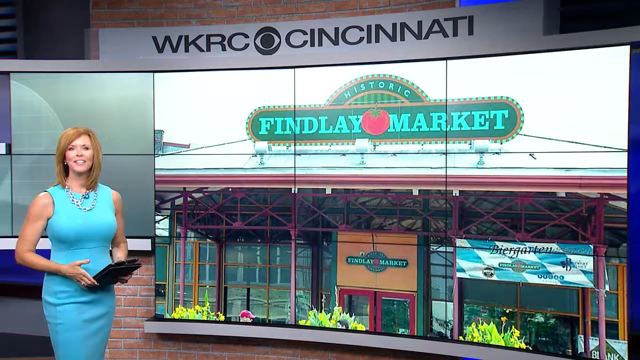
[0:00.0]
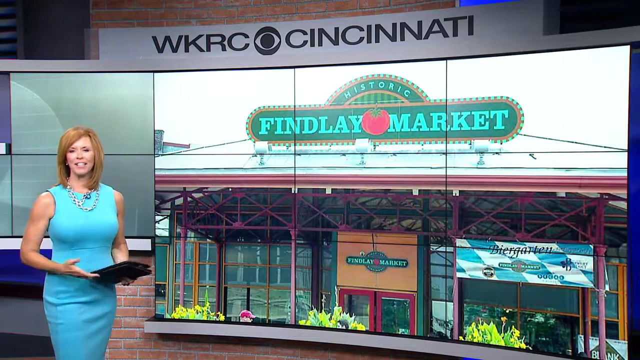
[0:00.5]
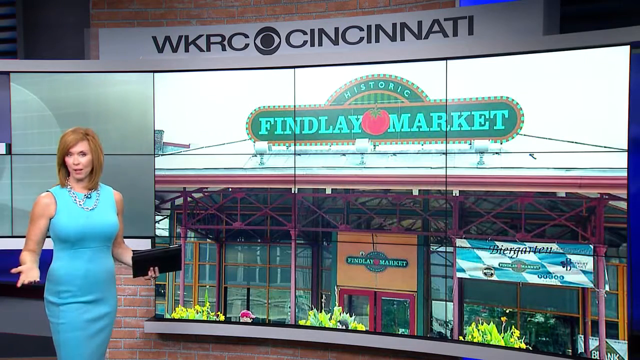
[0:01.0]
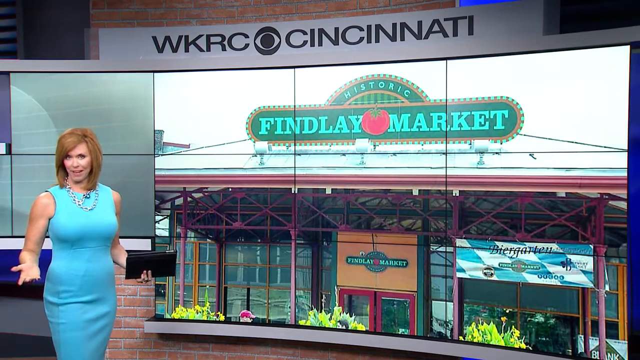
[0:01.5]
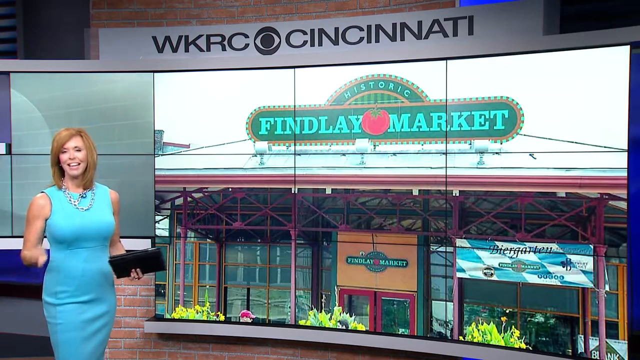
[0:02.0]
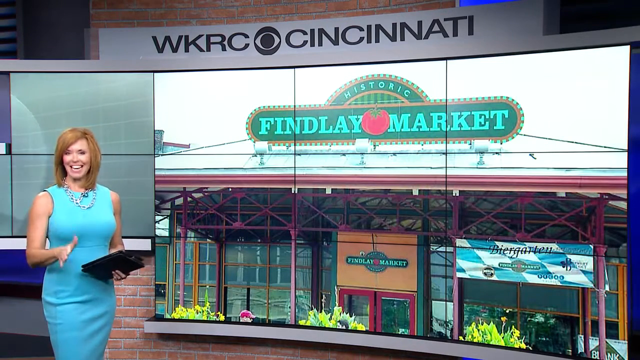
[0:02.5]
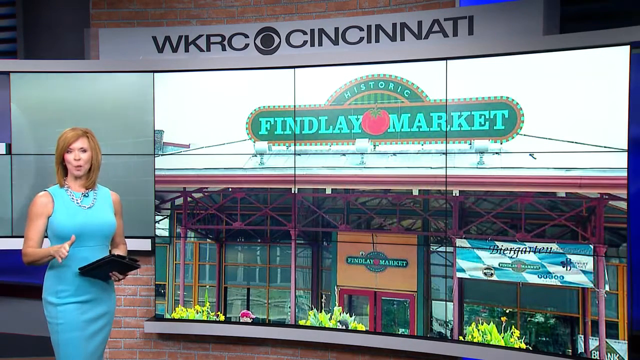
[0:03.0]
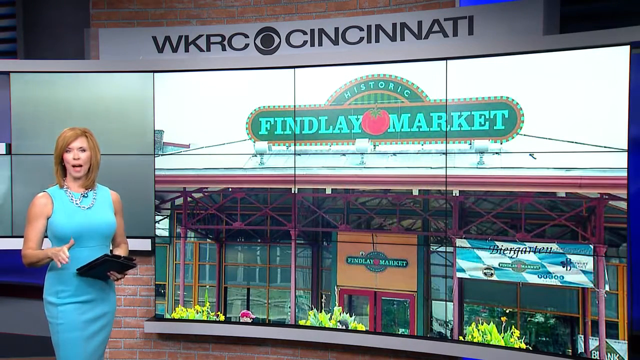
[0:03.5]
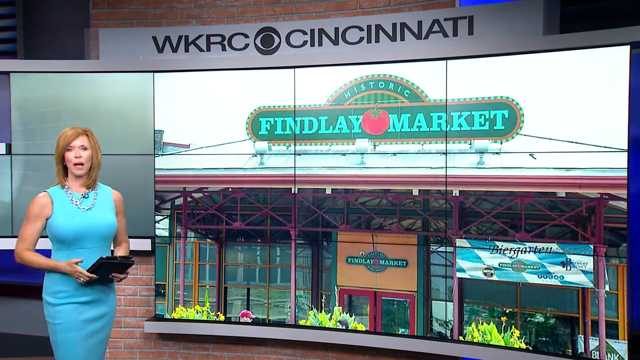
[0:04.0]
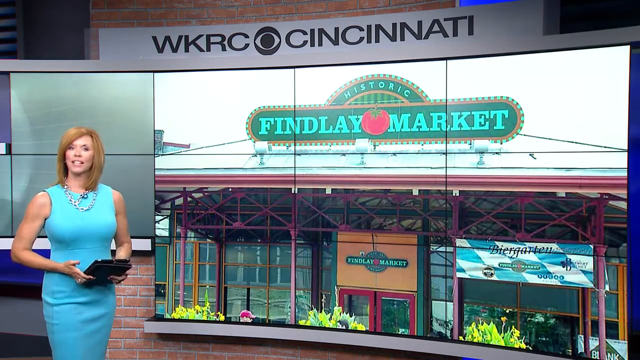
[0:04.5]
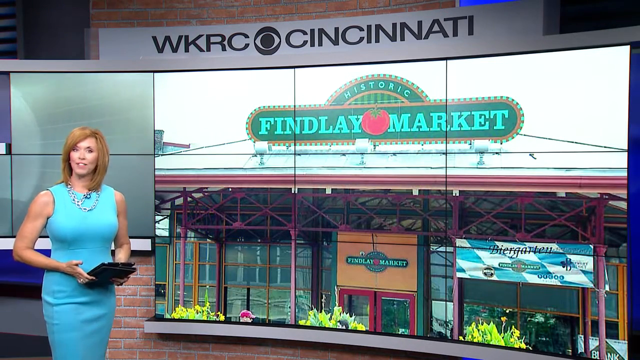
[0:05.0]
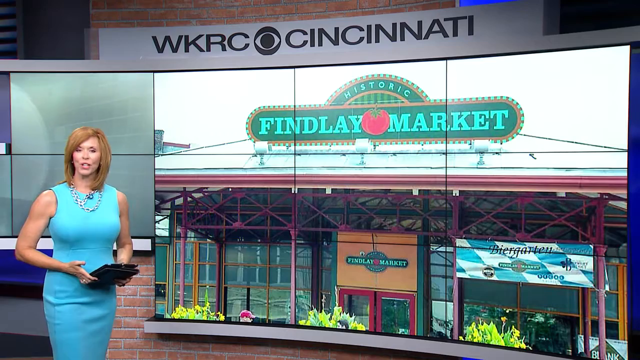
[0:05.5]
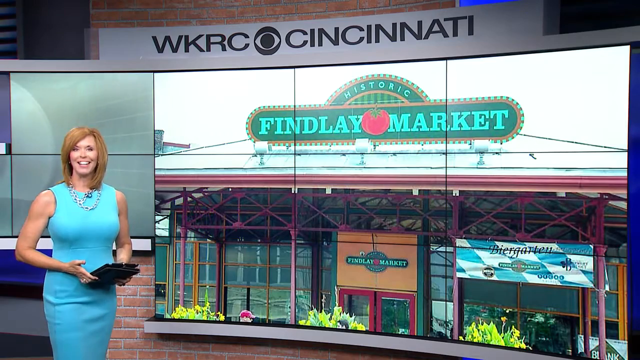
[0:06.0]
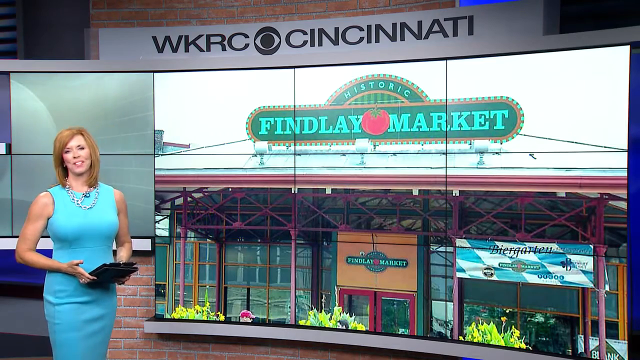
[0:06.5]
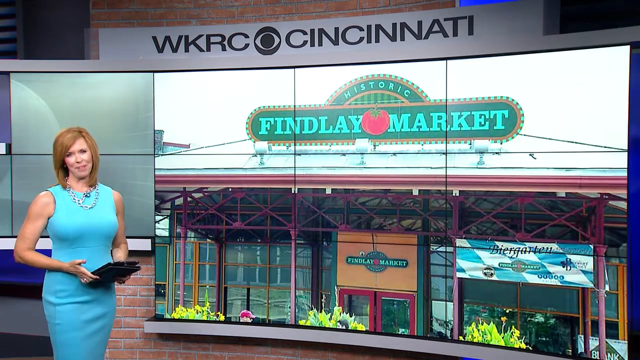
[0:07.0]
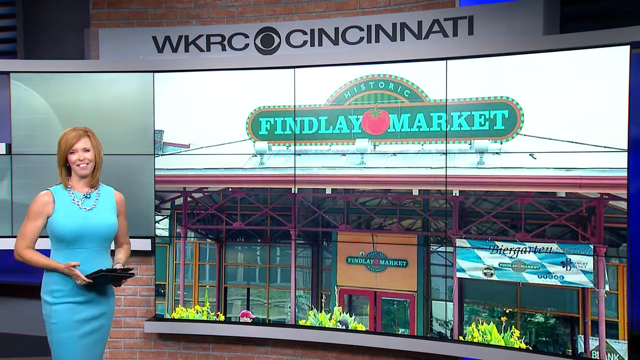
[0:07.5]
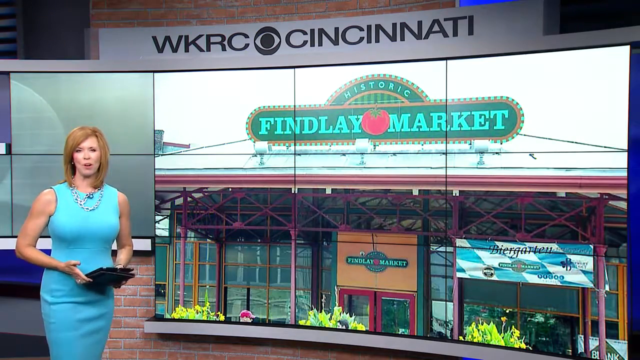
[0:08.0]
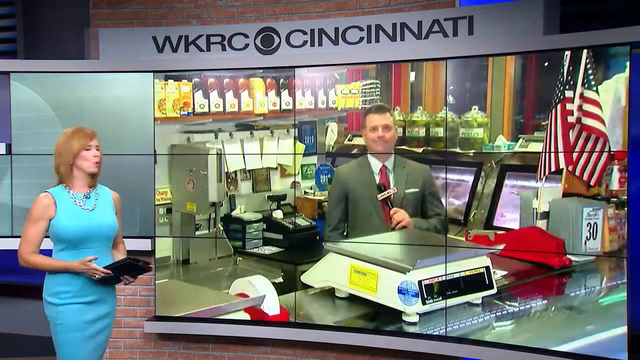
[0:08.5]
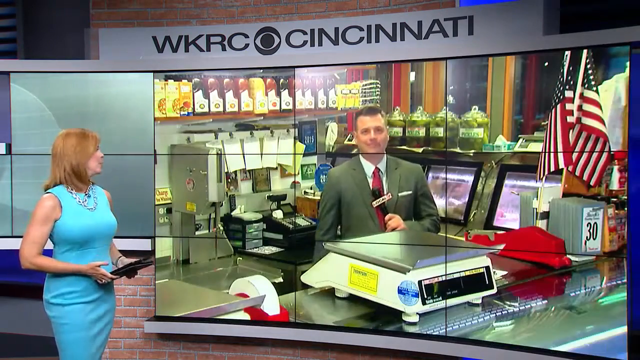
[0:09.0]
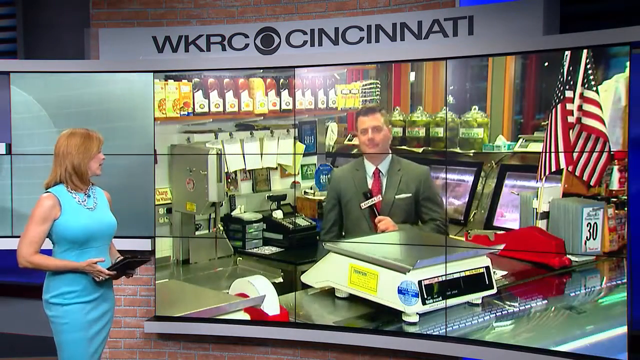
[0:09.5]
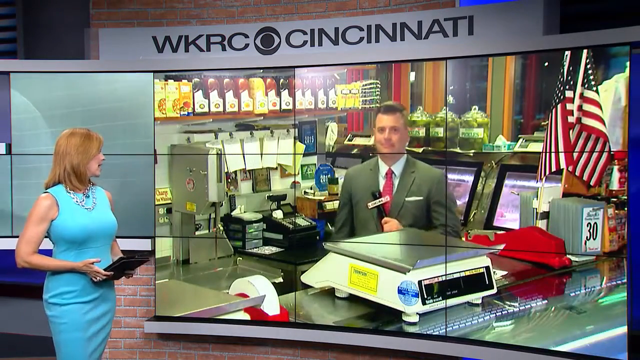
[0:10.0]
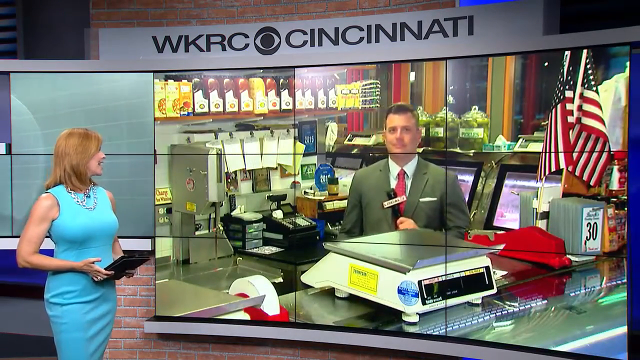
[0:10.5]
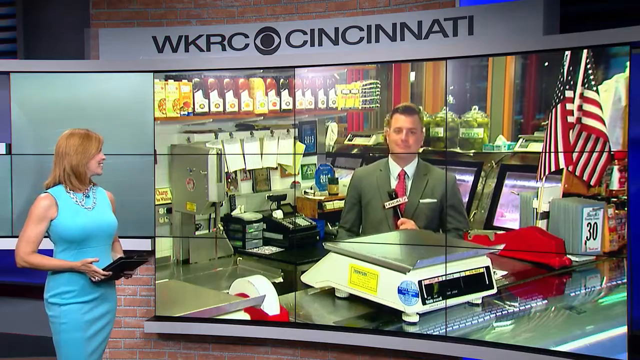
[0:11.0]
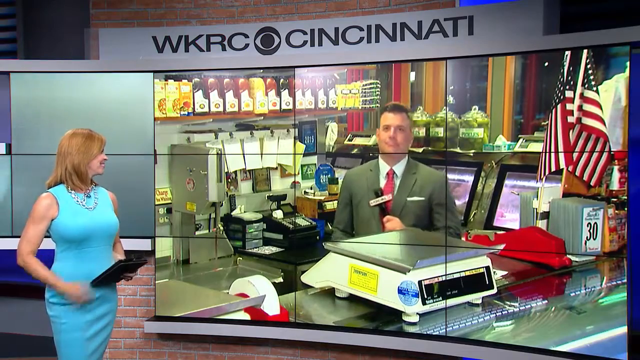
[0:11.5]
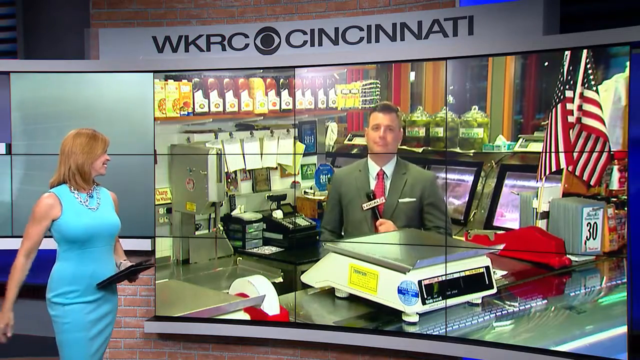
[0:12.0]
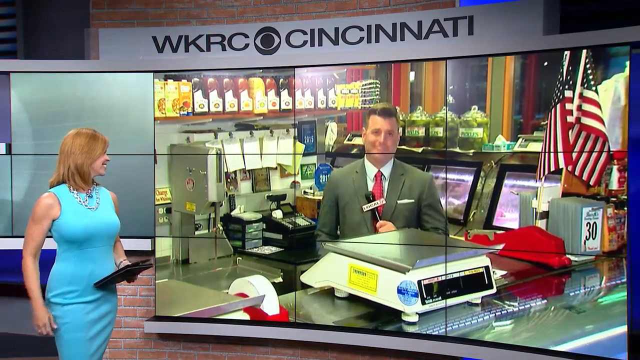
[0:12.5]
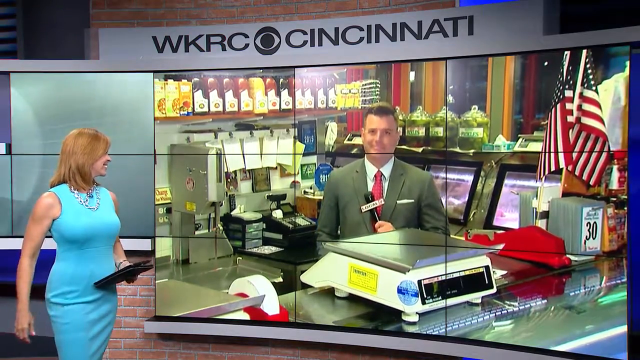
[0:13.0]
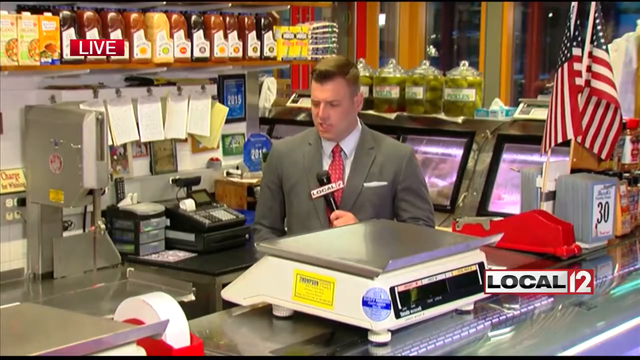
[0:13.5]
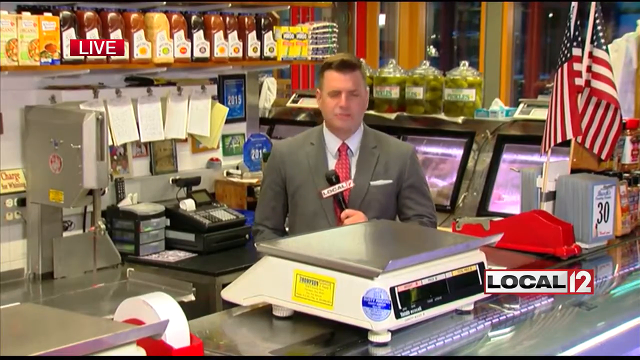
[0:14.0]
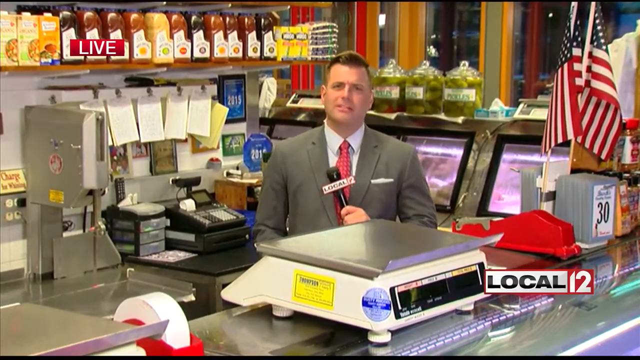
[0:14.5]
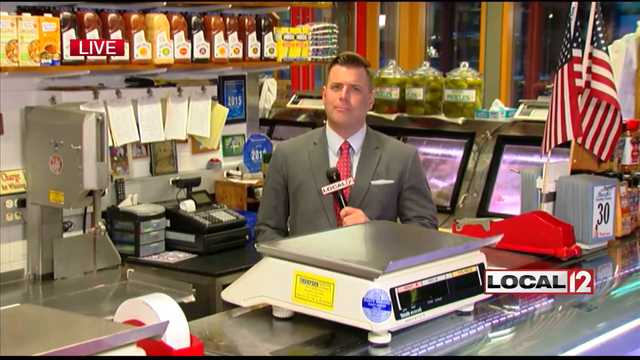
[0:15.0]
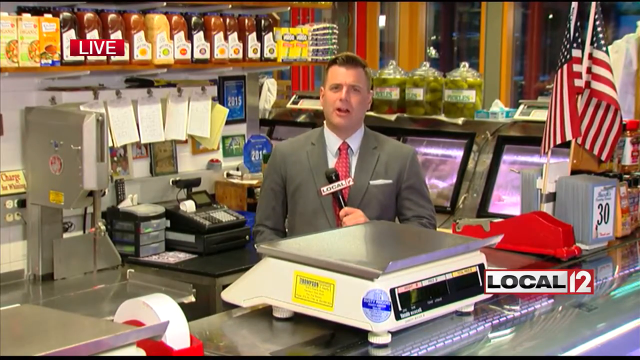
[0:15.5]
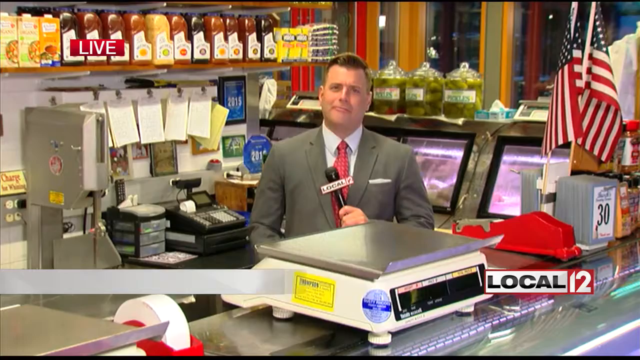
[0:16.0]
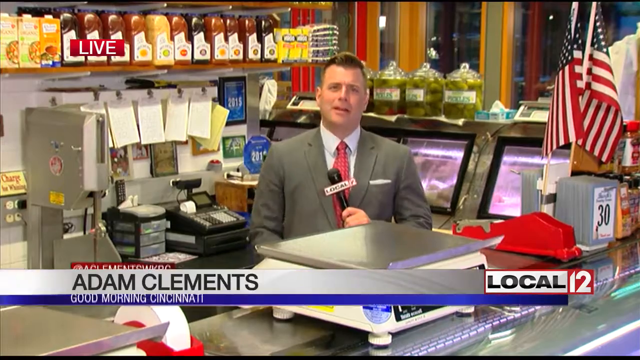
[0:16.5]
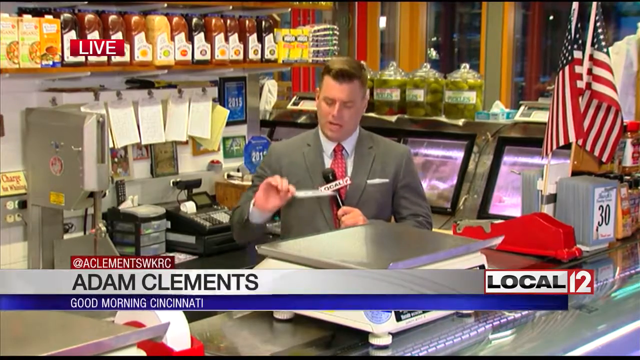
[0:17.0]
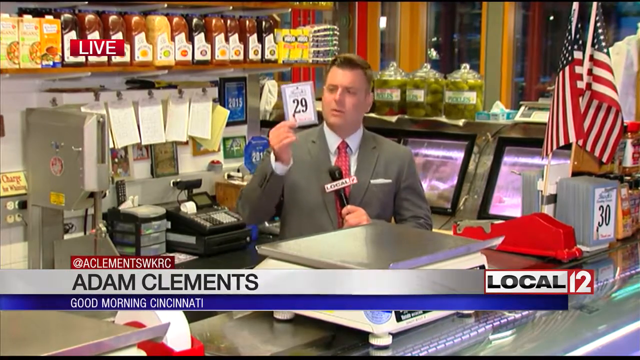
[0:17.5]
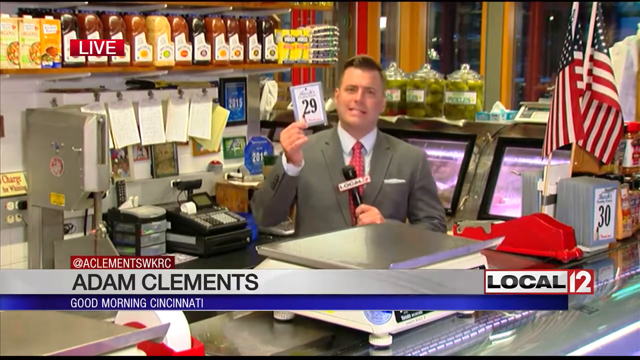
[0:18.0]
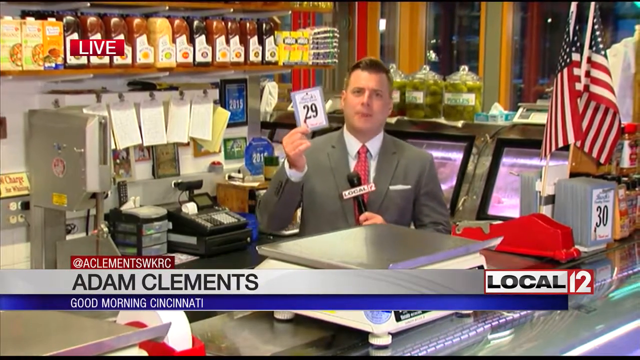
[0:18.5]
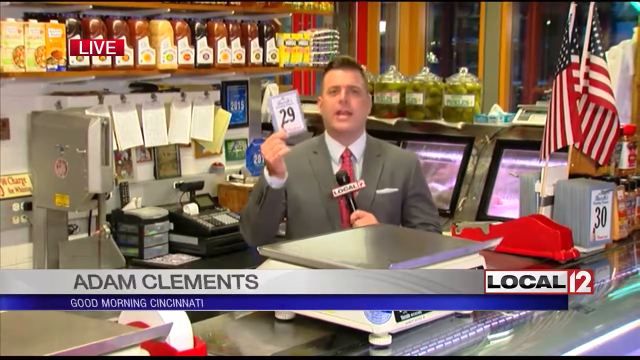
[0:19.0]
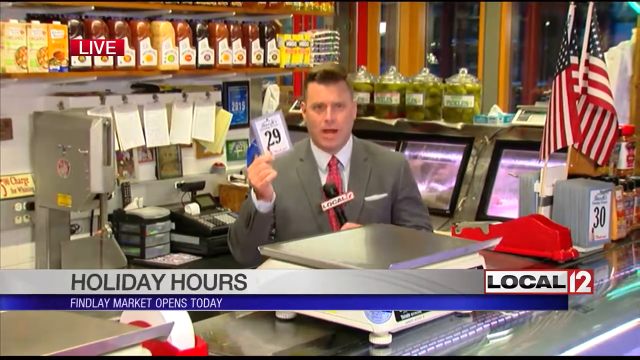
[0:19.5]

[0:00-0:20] A female news anchor, Caucasian and appearing to be in her 40s, wears a turquoise off-the-shoulder dress. In her left hand she holds what looks like a purse, possibly some kind of booklet. At the top of the screen it reads "WKRC Cincinnati," with the CVS symbol between "WKRC" and "Cincinnati." To the left of the woman is a screen that reads "market" with a tomato in the middle. She speaks while looking directly at the camera, opens her arms with her palms facing upward, and looks down. She raises her right hand and motions it forward as if emphasizing a point, then places her hand back on the black booklet-like object she is carrying. She keeps speaking, sort of smiling as she talks, then looks at the screen next to her. The picture on the screen changes to a male news anchor, also Caucasian, who looks to be in his late 30s or maybe 40s. He stands in what seems to be a market or deli, with a scale for weighing food in front of him, and holds a microphone in his left hand. The picture then changes to show only him, holding the microphone and speaking directly to the camera. He wears a gray suit, a white shirt and a red tie. His name, "Adam Clements," appears at the bottom of the screen, with his email, "@ a Clements WKRC," above it. Adam holds up a sign with the number 29 on it.